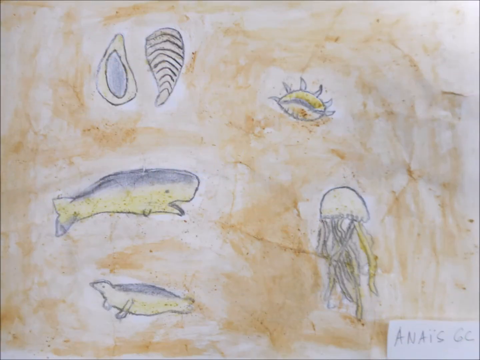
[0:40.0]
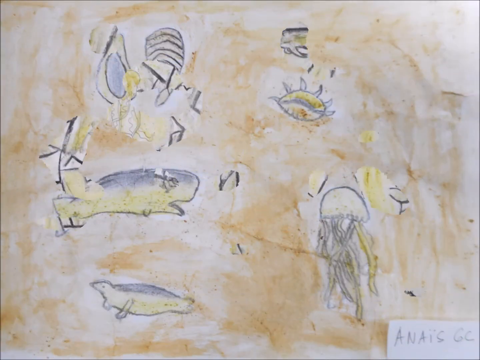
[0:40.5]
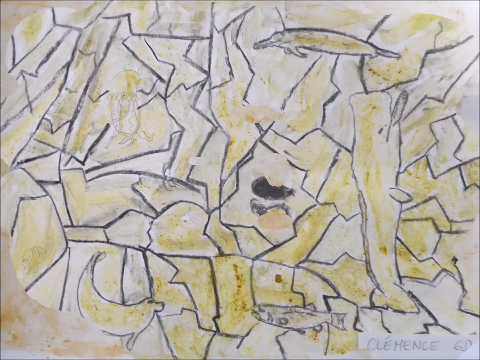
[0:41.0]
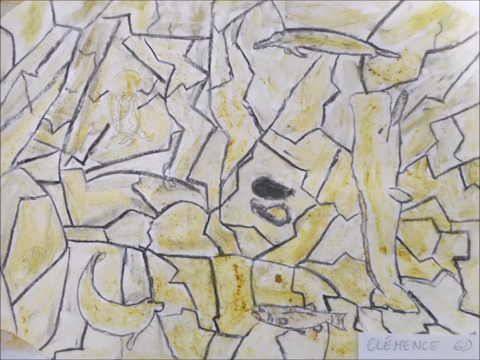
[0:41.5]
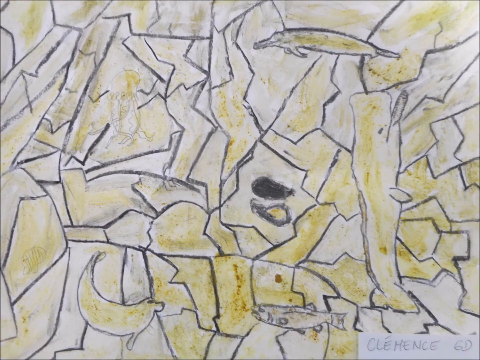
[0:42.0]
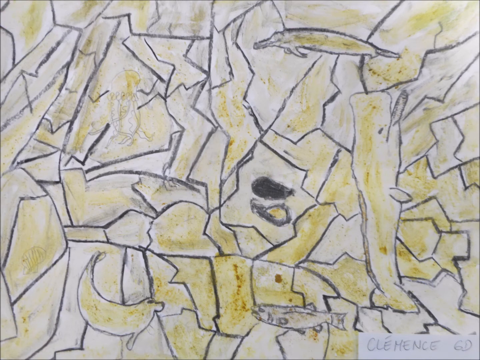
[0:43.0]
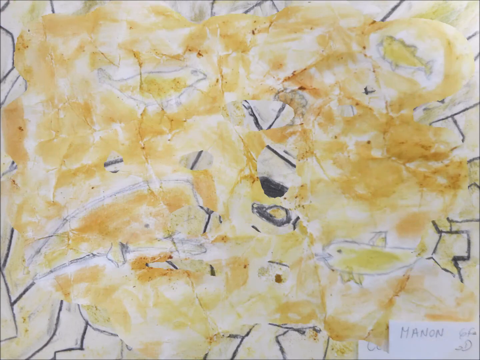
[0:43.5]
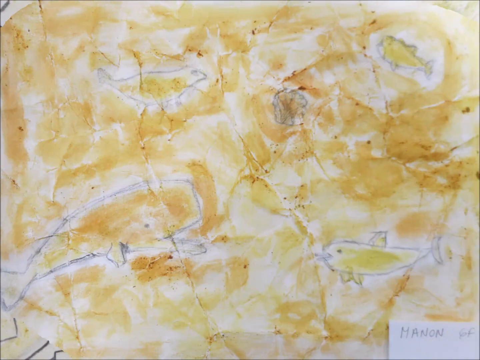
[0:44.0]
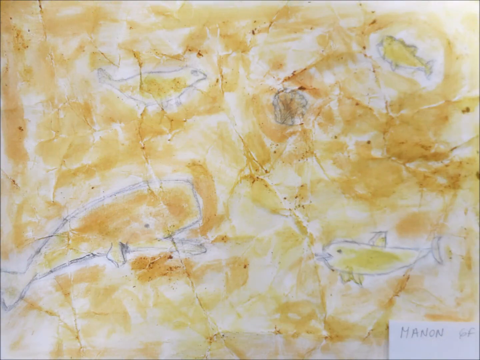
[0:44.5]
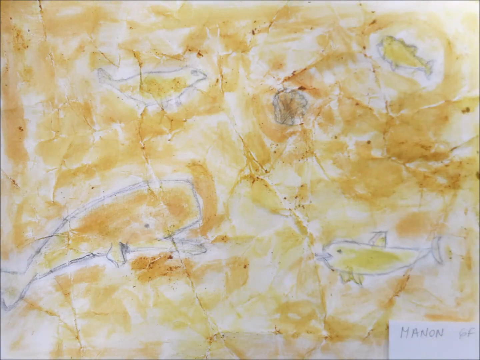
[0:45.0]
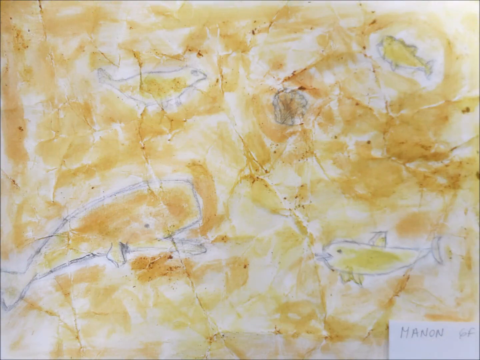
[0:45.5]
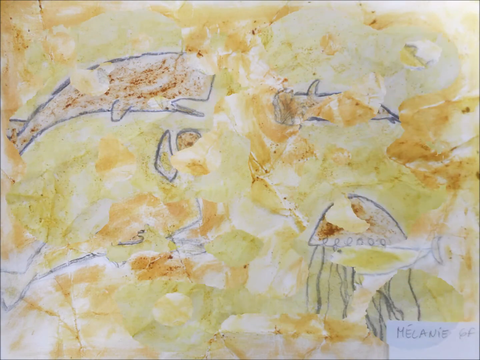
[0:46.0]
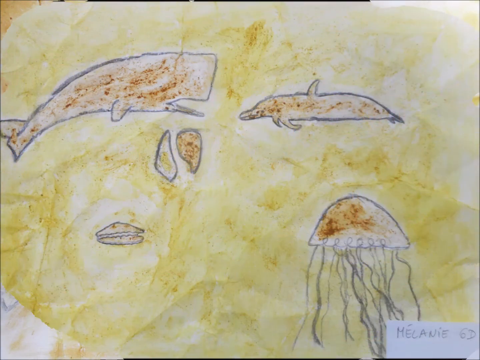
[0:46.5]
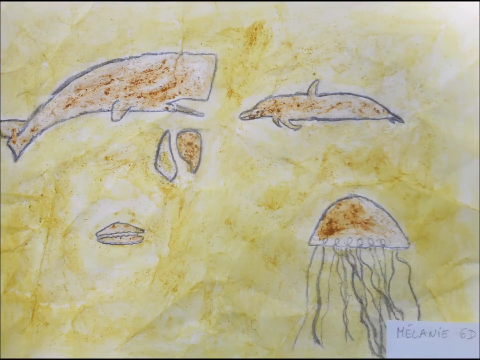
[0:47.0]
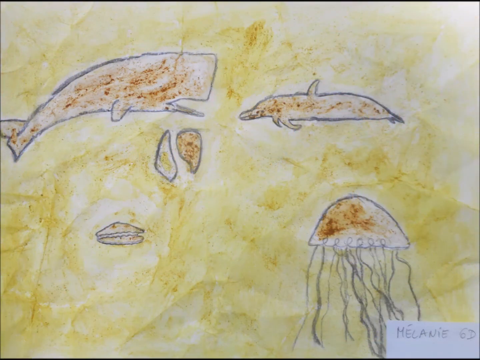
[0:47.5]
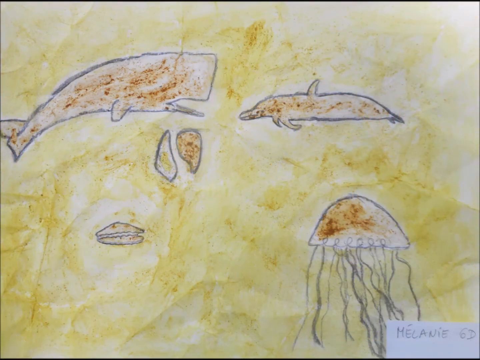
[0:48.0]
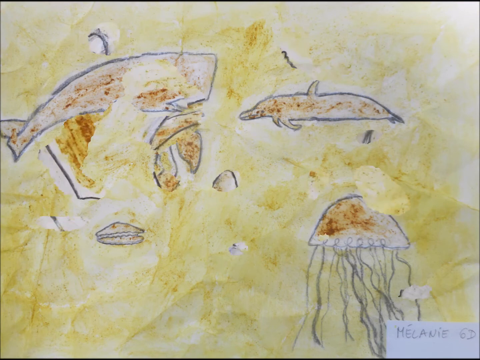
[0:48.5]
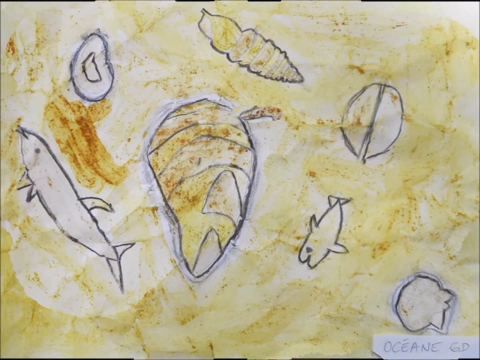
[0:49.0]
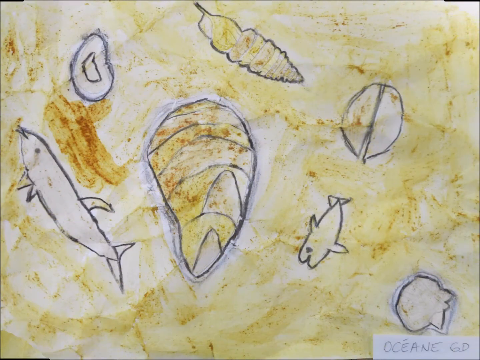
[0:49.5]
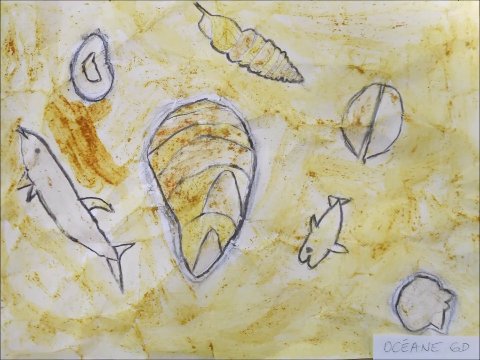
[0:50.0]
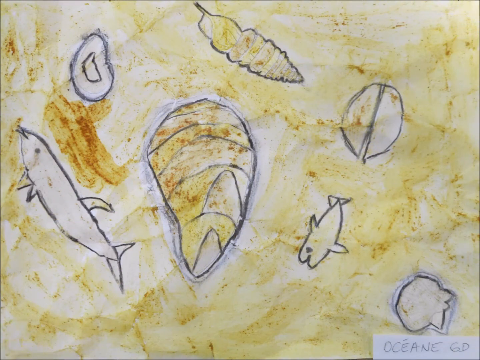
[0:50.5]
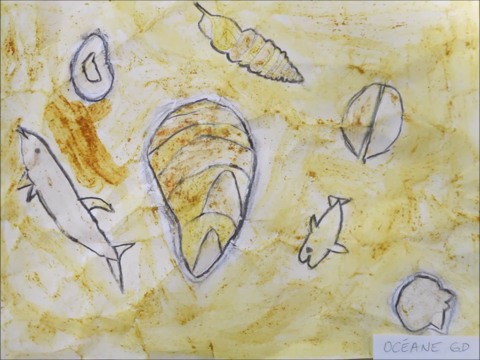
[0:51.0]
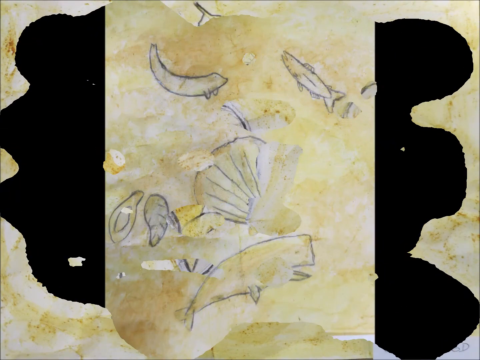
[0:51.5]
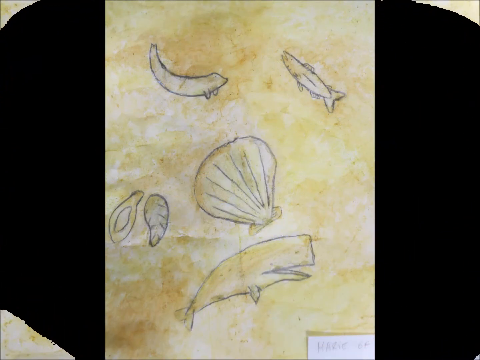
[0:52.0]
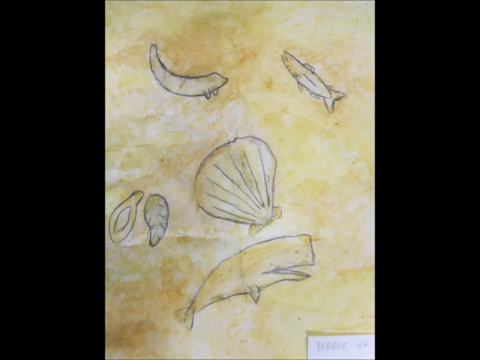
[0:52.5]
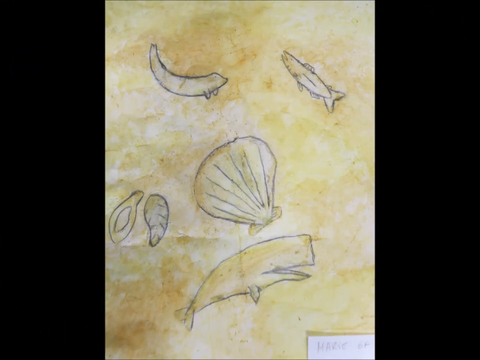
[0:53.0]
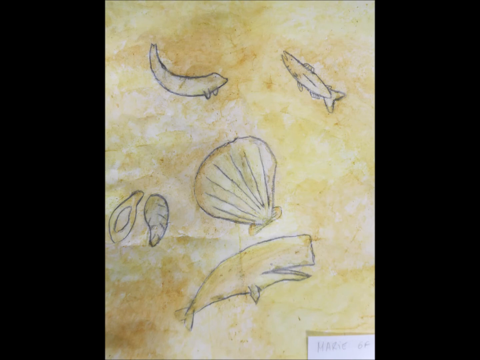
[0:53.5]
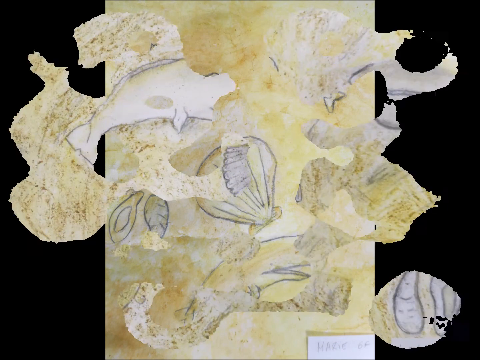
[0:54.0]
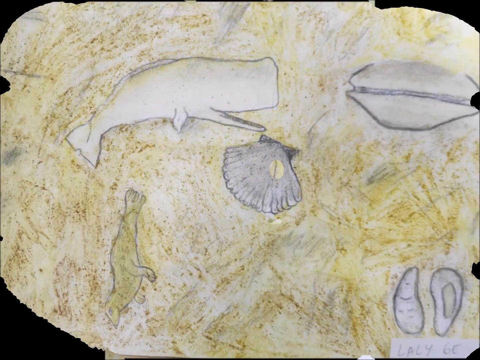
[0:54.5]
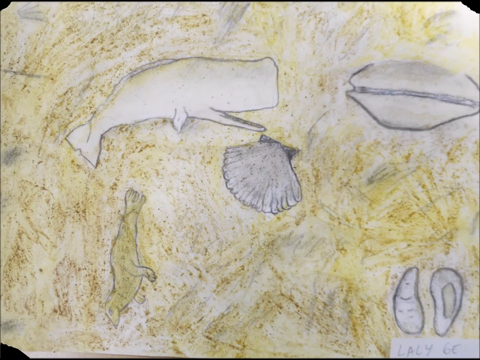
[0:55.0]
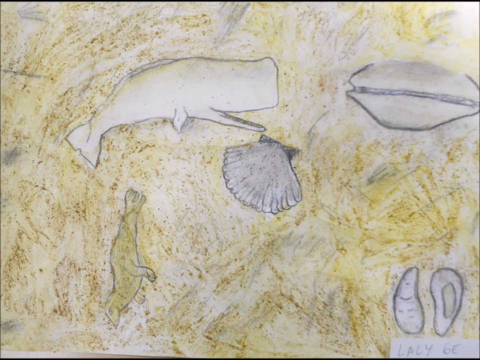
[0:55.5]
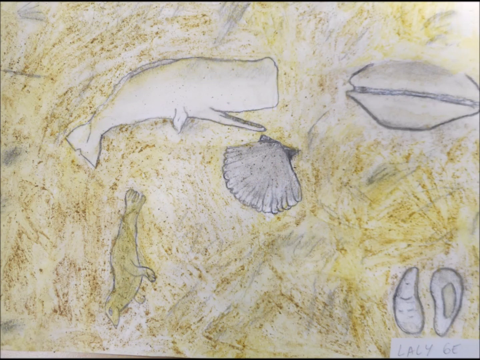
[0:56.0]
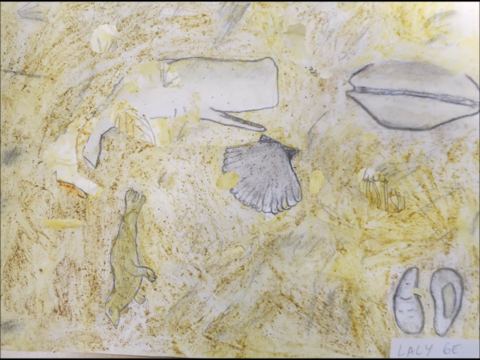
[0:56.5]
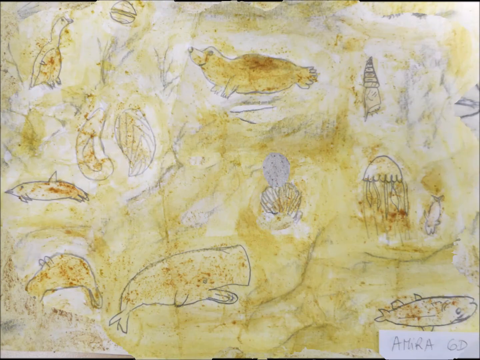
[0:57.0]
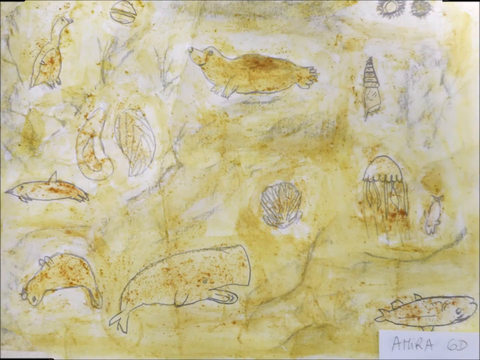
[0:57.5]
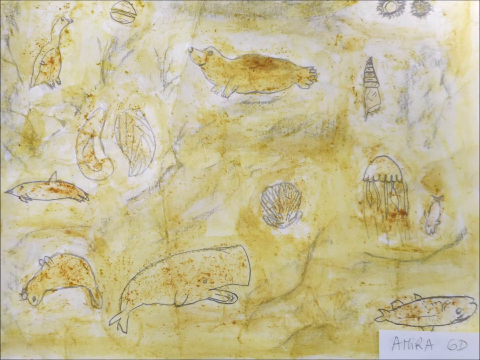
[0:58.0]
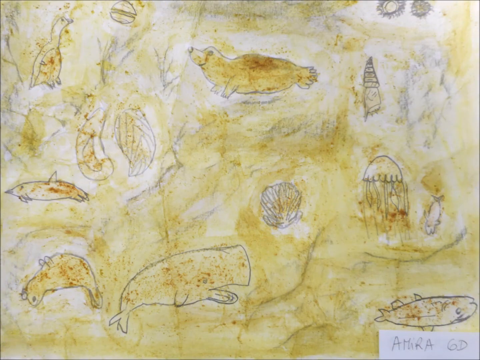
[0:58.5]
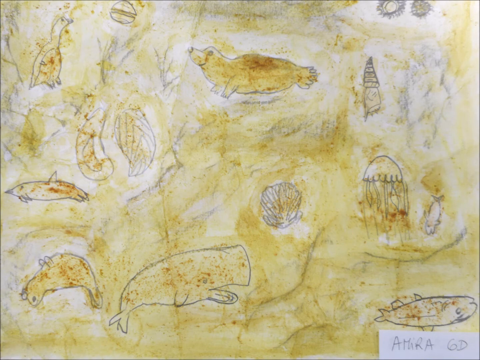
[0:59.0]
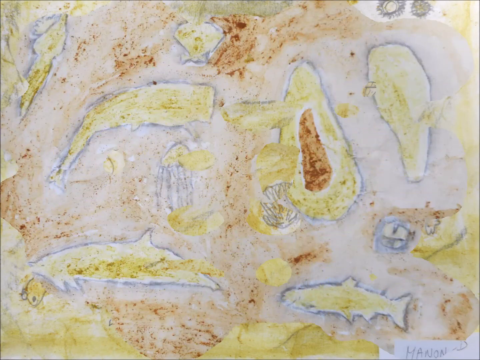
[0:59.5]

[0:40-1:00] More children's drawings of marine life, done in pencil with colors, appear. The first shows an oyster, a whale, what looks to be a seal, a squid, a jellyfish, and another type of fish. Another shows a dolphin, other types of fish, and oysters at the bottom of the sea, along with a whale. The next shows another whale, another dolphin, several types of fish, and an oyster. Another drawing shows a dolphin, a whale, a starfish, an oyster, a squid, and a jellyfish.